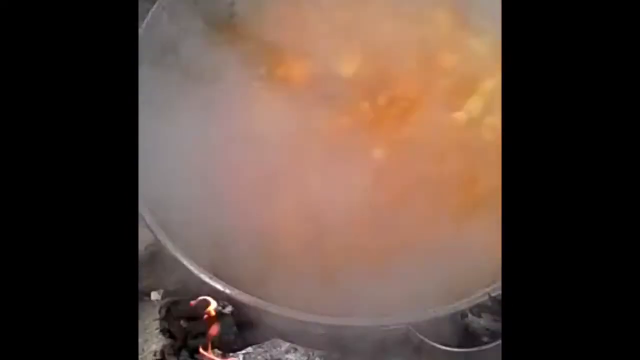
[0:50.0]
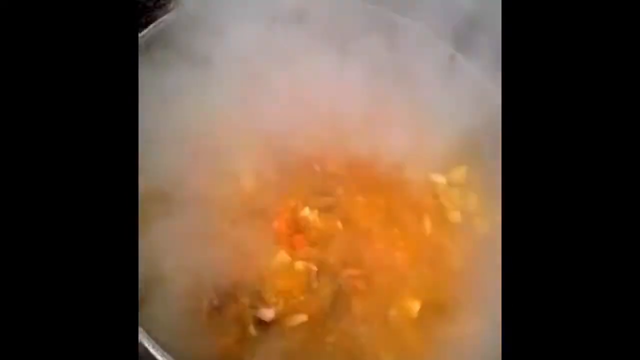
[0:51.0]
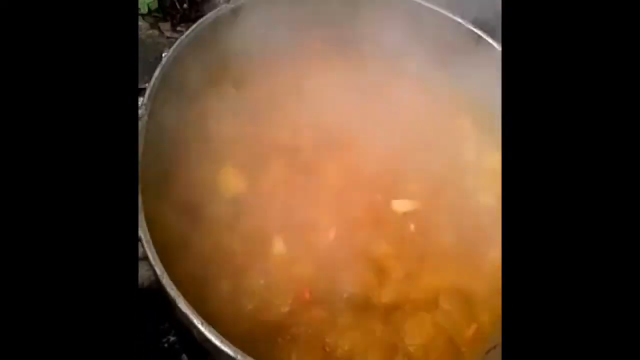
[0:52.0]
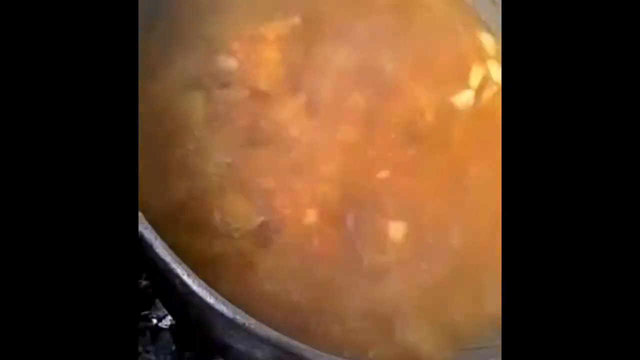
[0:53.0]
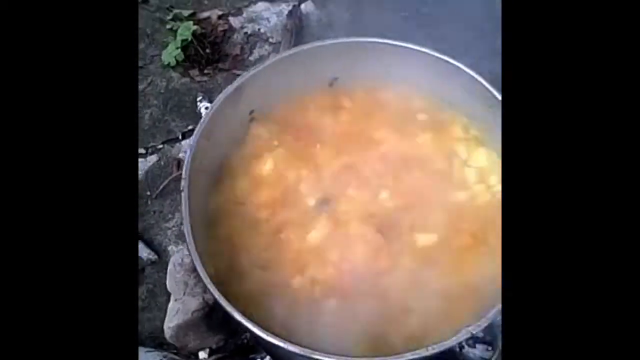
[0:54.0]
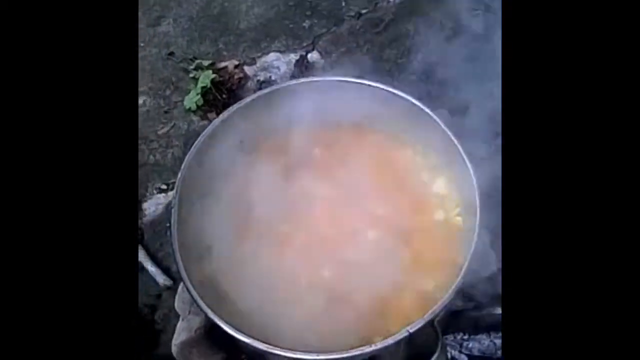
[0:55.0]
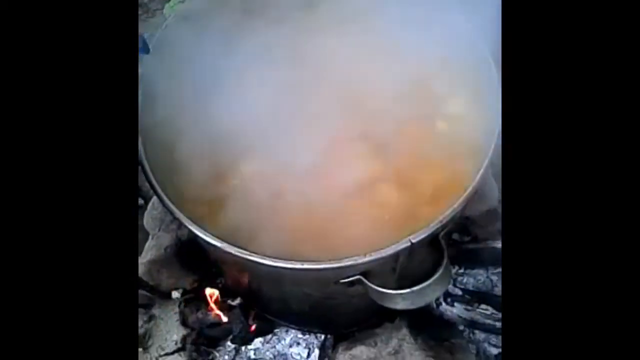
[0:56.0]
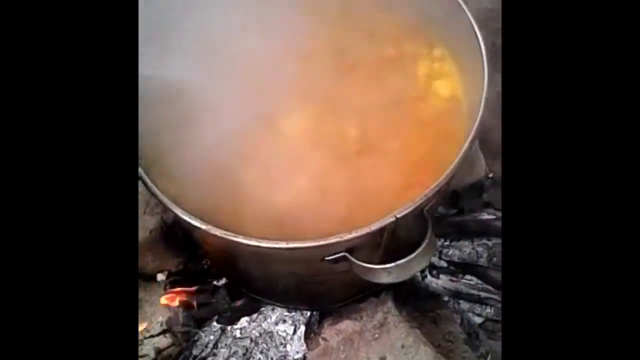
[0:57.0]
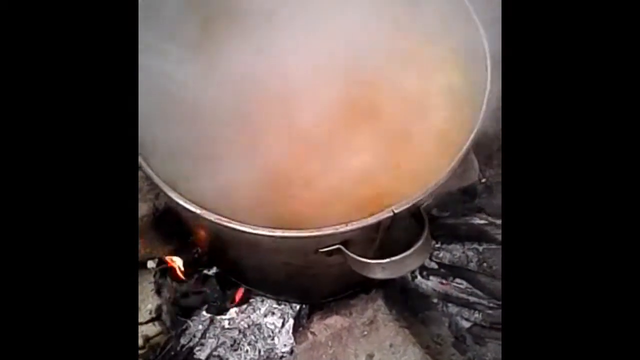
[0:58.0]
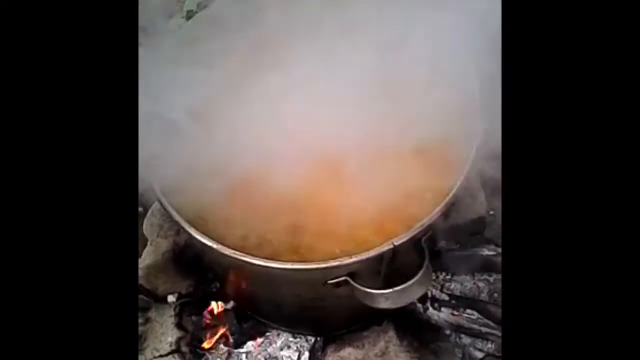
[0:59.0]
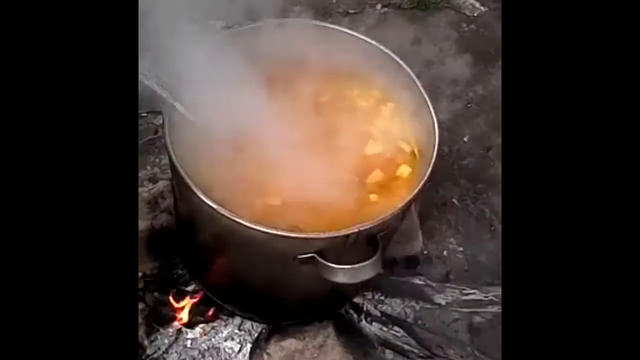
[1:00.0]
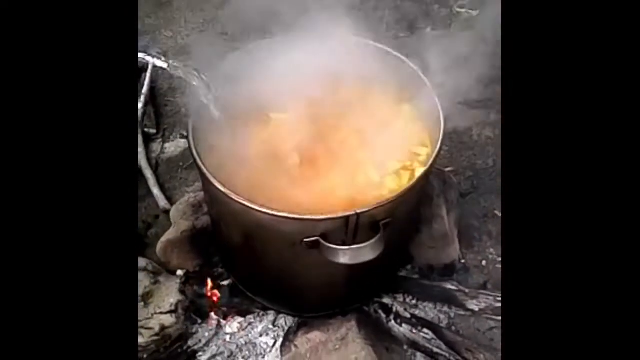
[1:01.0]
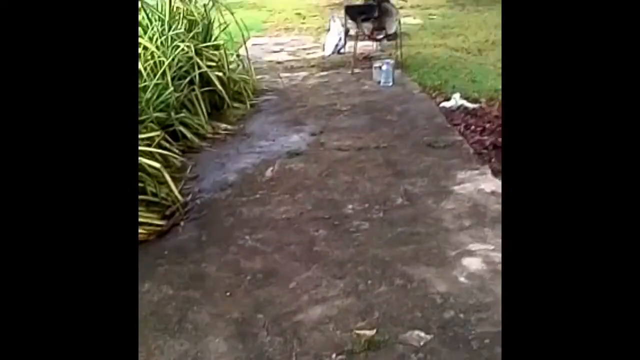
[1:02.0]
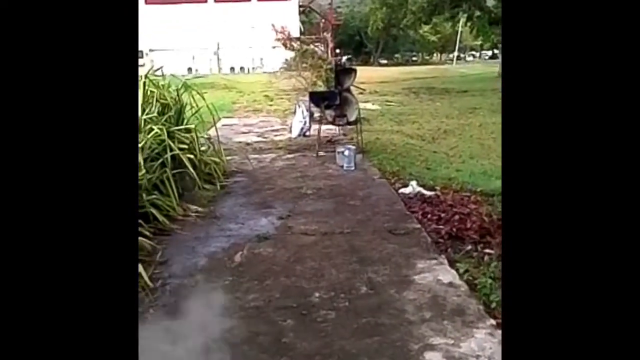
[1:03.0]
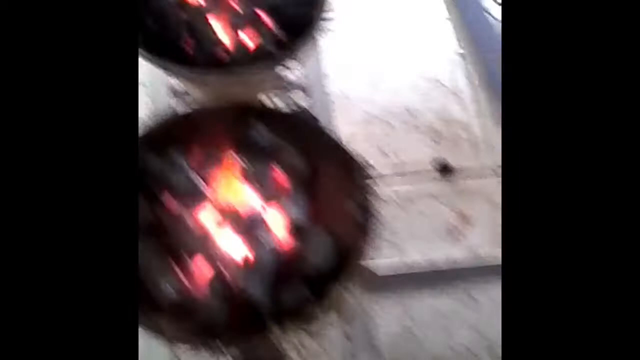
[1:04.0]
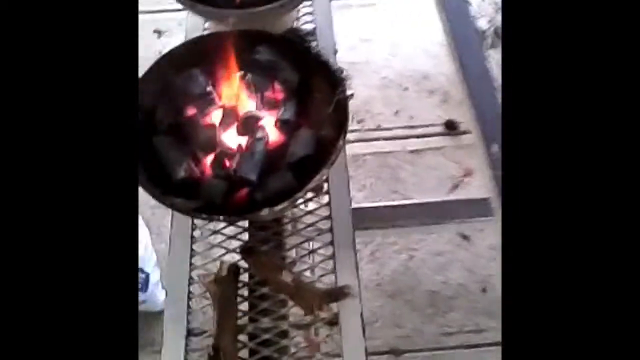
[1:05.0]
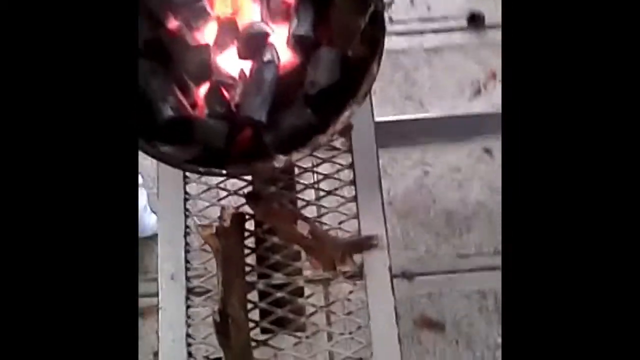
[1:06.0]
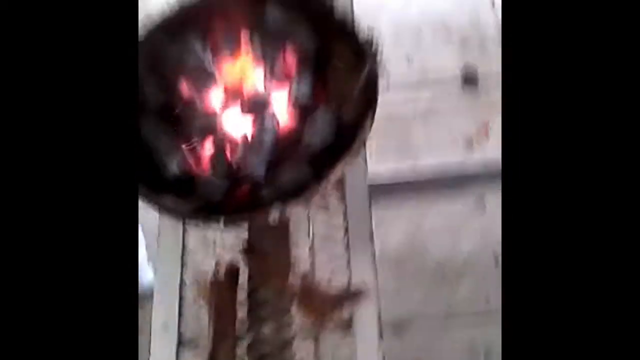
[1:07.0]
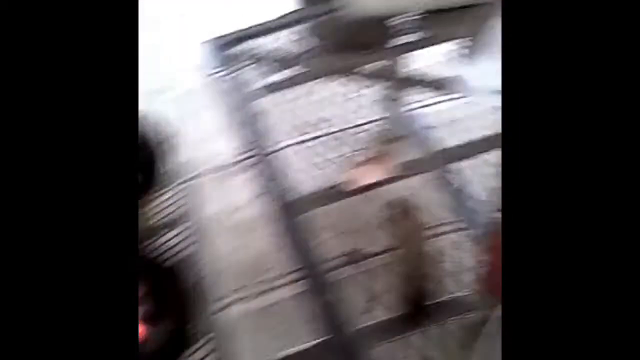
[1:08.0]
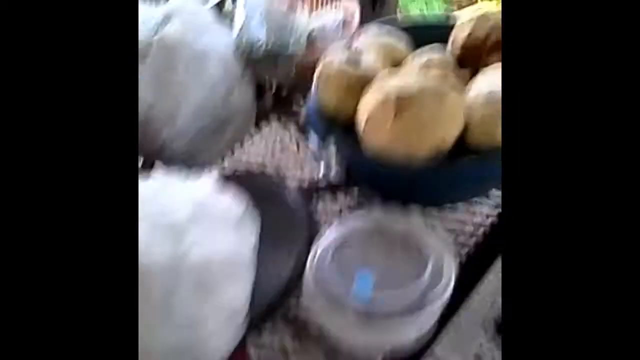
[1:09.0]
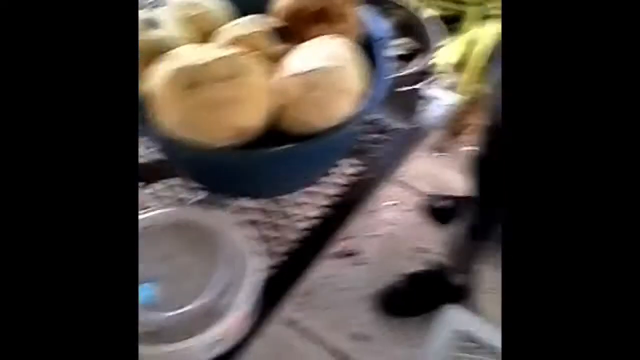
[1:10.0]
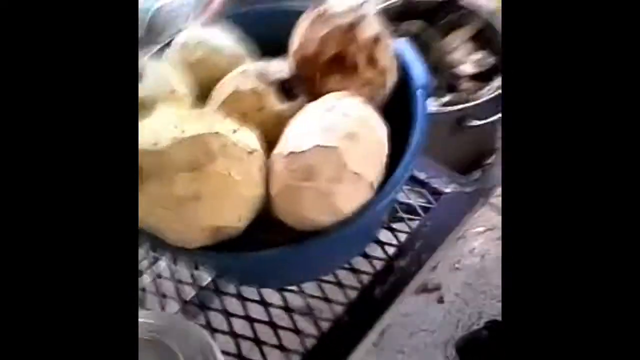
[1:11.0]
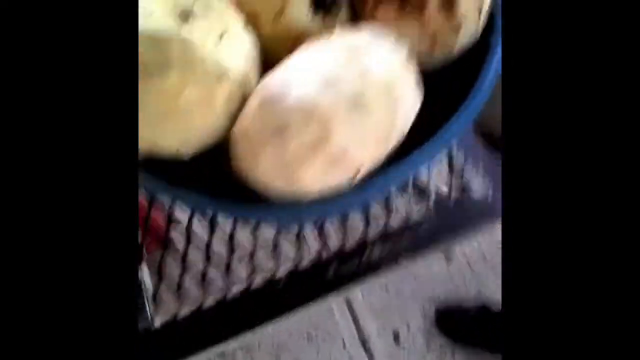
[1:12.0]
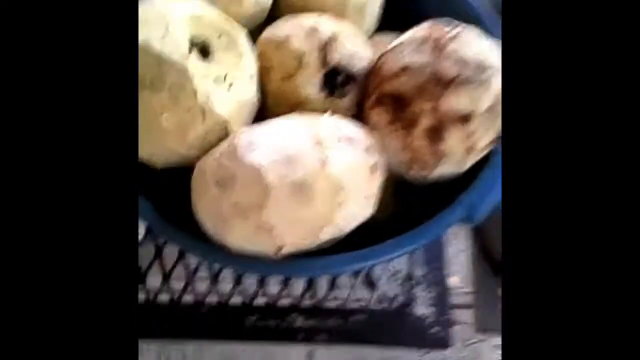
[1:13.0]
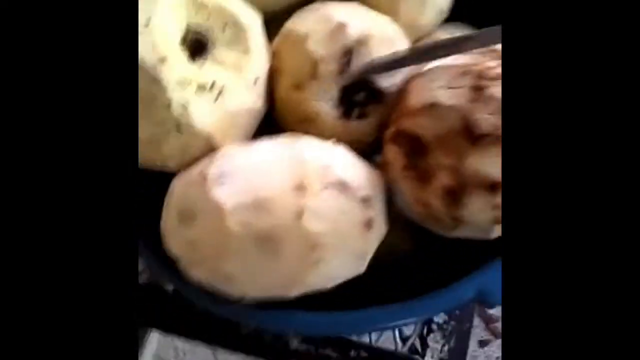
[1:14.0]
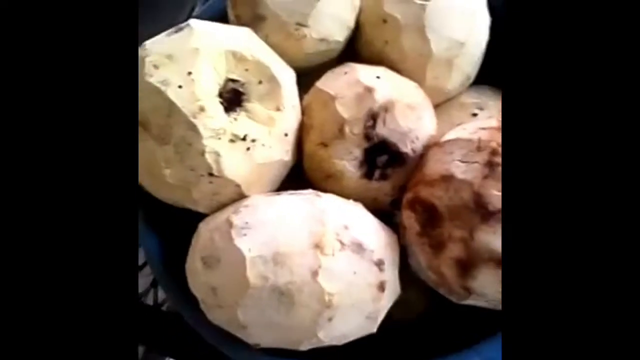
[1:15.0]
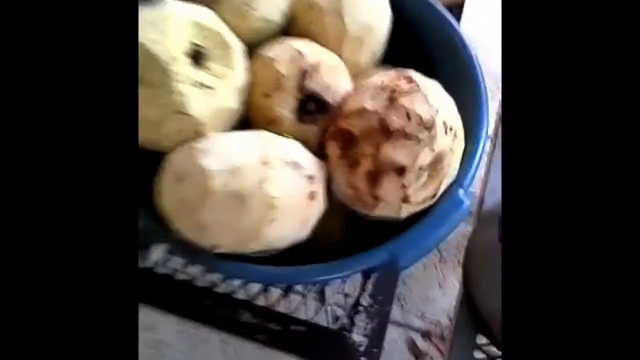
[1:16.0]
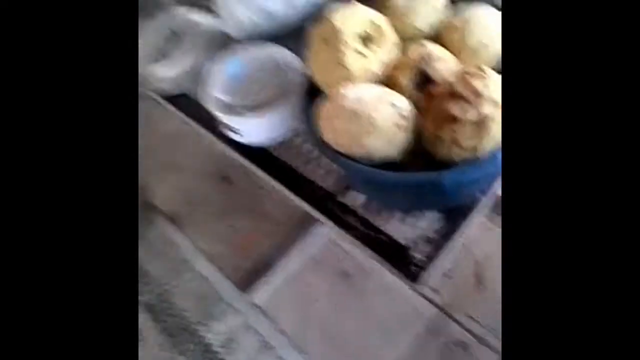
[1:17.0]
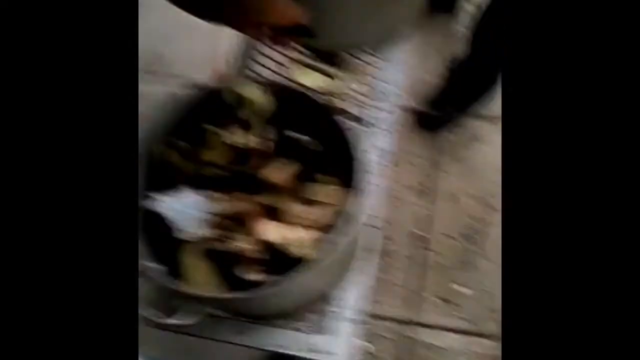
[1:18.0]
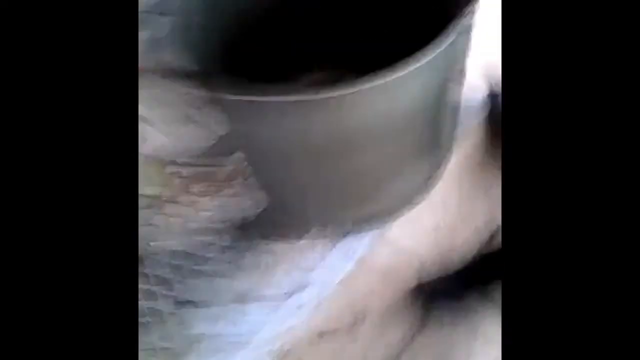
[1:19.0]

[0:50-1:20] The camera is very close to the pot, looking down from the top again. Steam is all over and the contents bubble up, turning up some of the vegetables, which look like chopped-up green pieces of something. The broth is an orange, liquidy color. The ground around is concrete of different colors, and at the top left what look like weeds grow through cracks. To the left, somebody adds what looks like a bottle of water. There is a black chair with some kind of can of something in front of it. The view moves to a skillet that looks full of charcoal in the middle, sitting on one of the long grates, with a couple of broken-up twigs on the grate next to it. There are two skillets full of fire and charcoal. Next, there are shaved items that look almost like potatoes of some kind in a large blue bowl, apparently about seven, and someone taps the tops of these cut-up balls with a knife without doing much else. The view goes back to the skillet or pot, where a bunch of things are pulled up that look like the chopped, shaved round items. The final product looks almost like stew, full of carrots, cucumbers and other things, with what looks like cubes of beef.